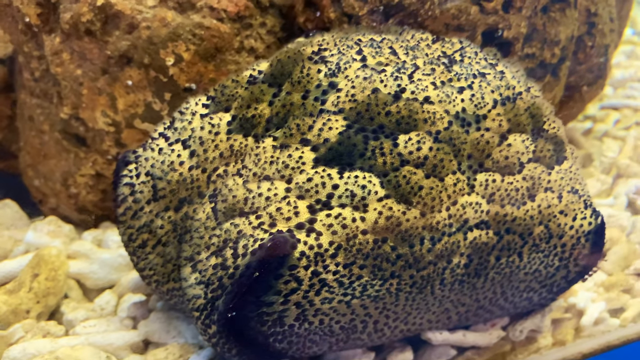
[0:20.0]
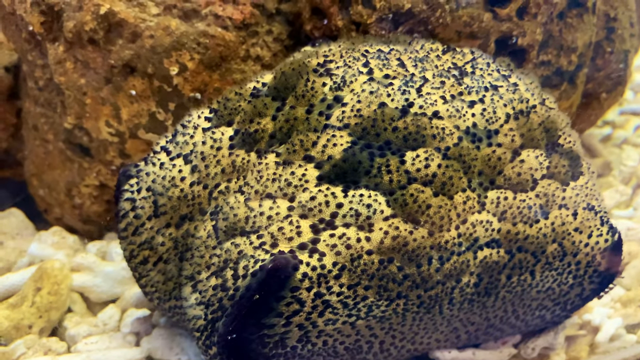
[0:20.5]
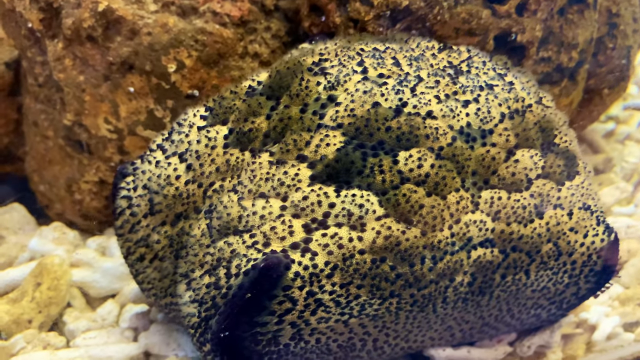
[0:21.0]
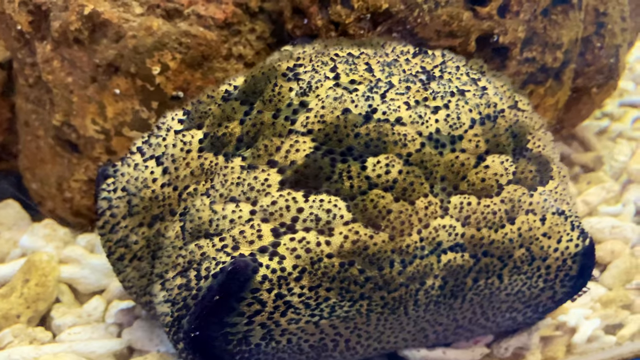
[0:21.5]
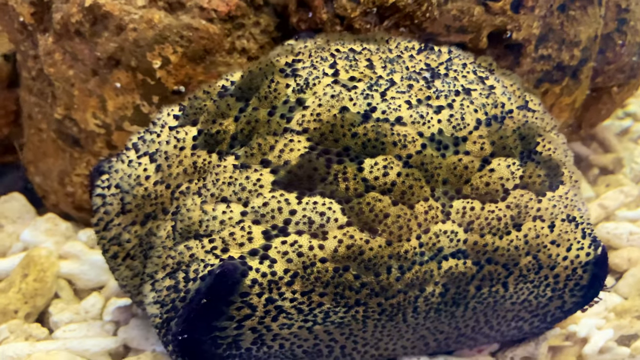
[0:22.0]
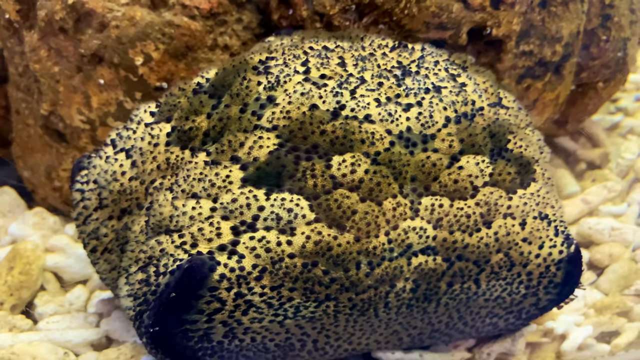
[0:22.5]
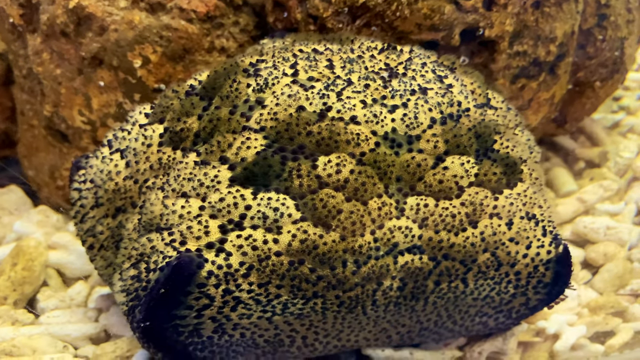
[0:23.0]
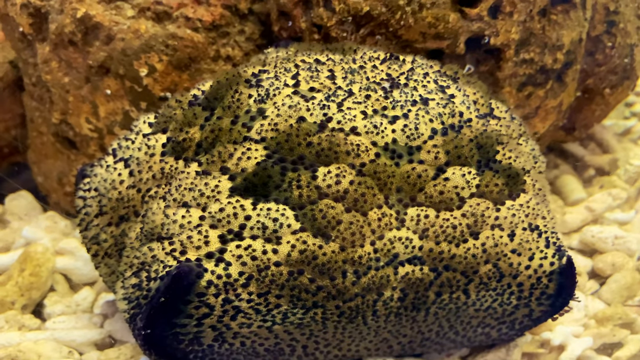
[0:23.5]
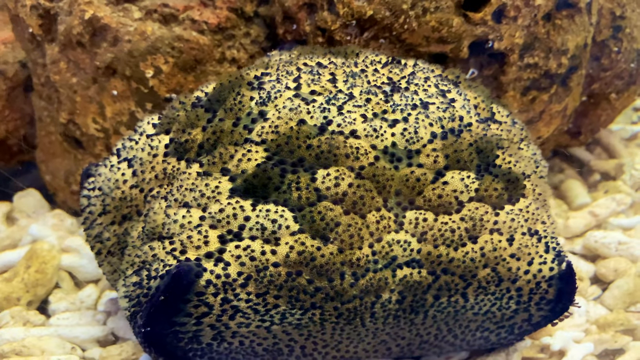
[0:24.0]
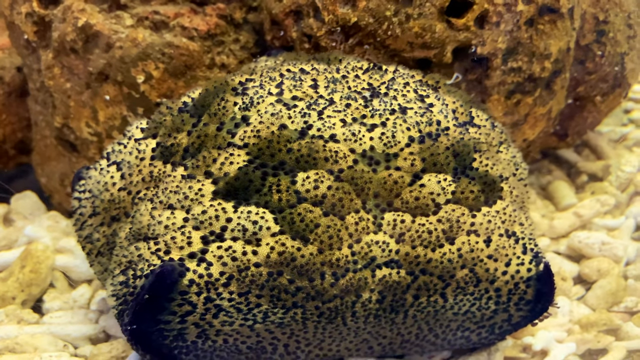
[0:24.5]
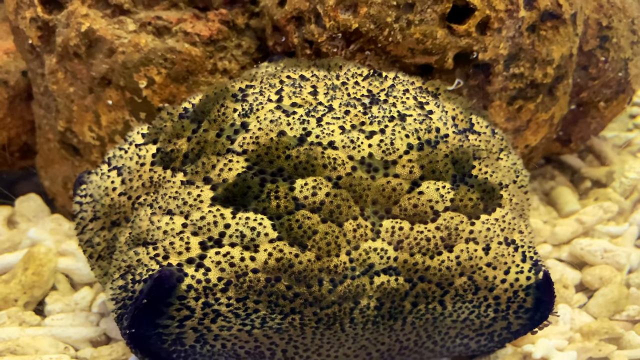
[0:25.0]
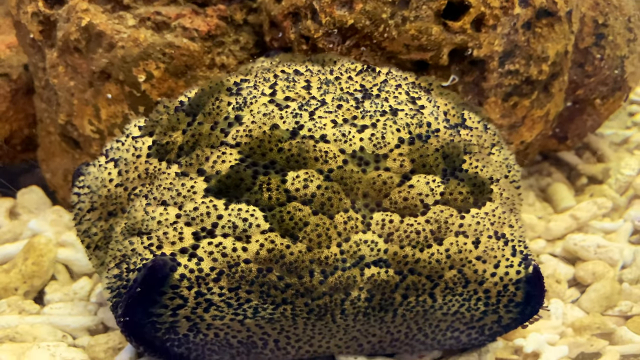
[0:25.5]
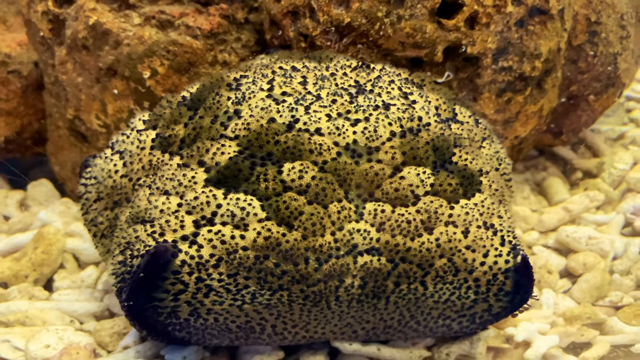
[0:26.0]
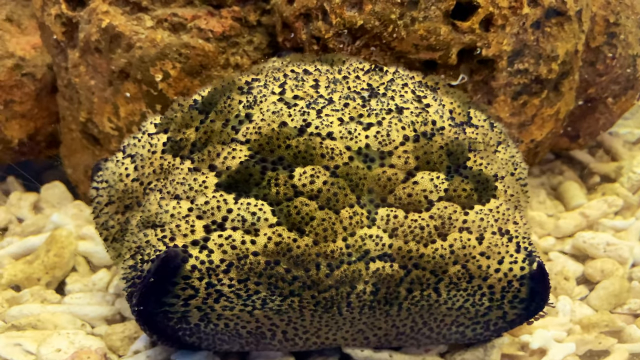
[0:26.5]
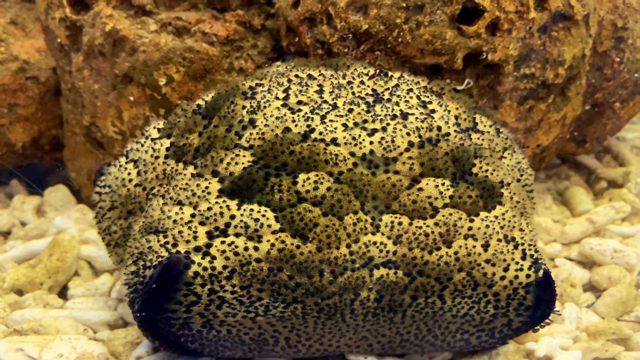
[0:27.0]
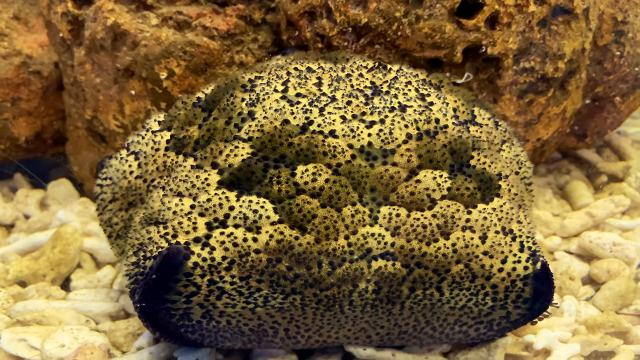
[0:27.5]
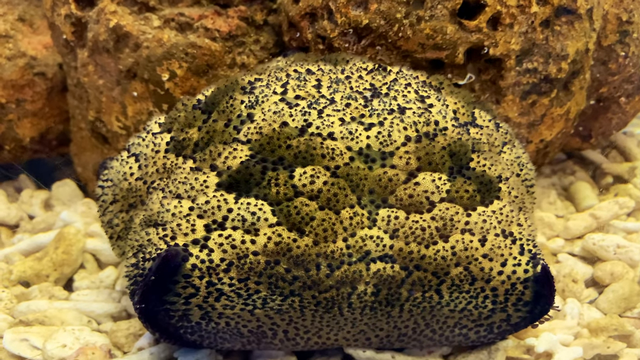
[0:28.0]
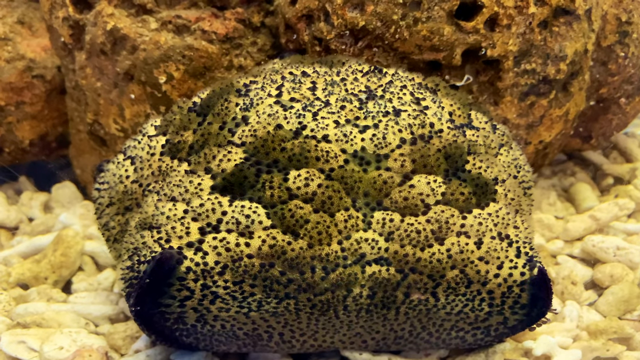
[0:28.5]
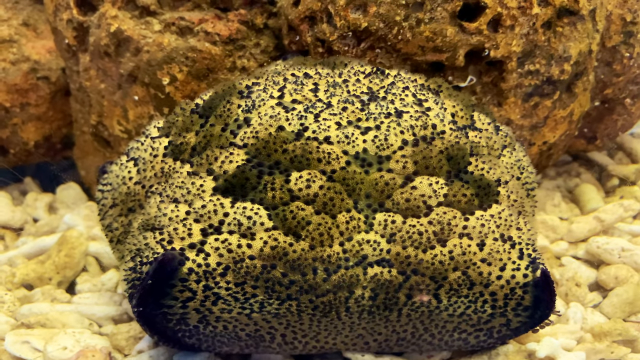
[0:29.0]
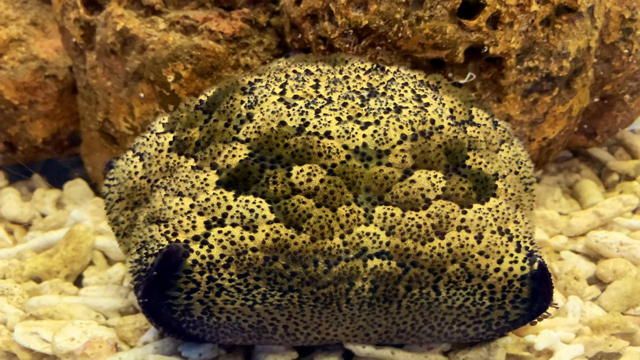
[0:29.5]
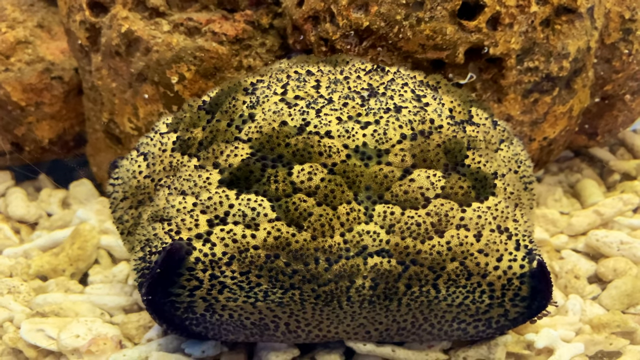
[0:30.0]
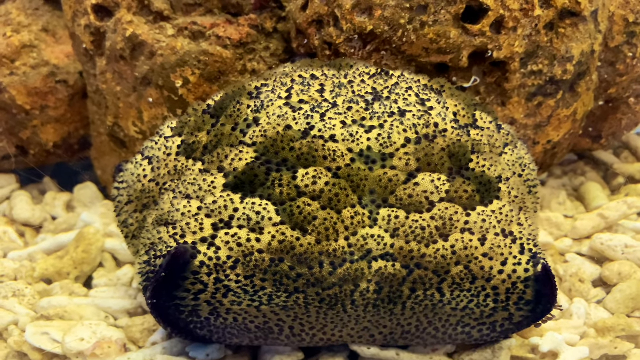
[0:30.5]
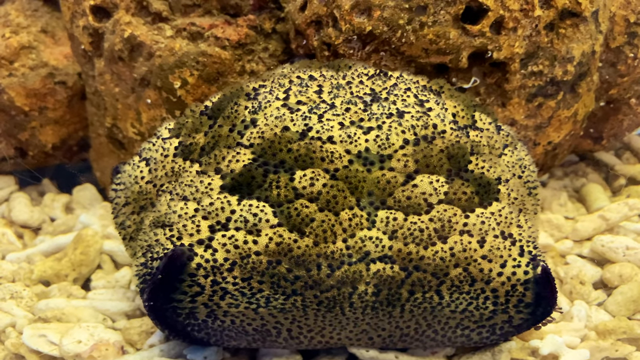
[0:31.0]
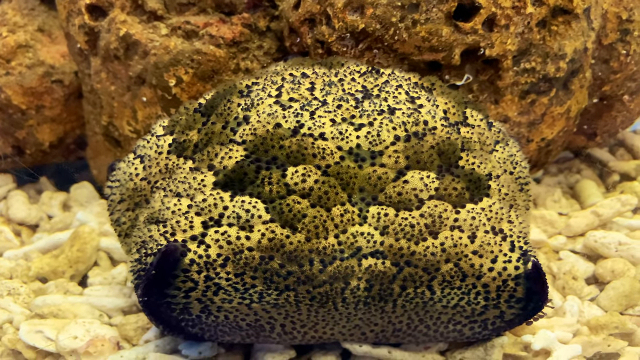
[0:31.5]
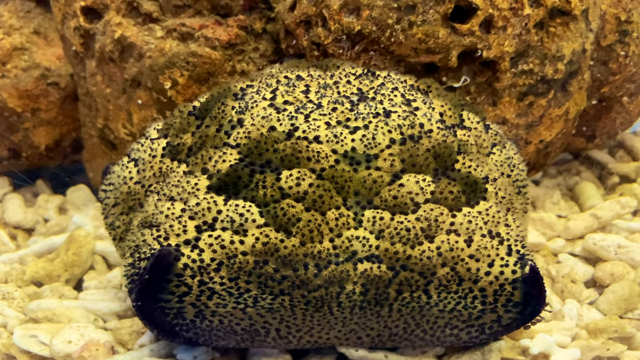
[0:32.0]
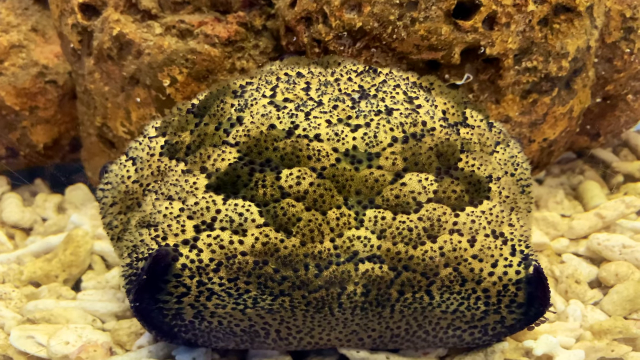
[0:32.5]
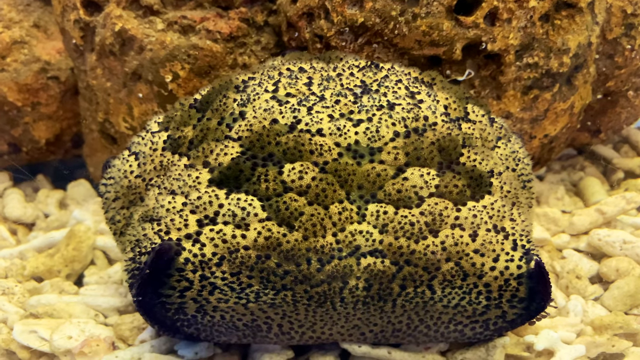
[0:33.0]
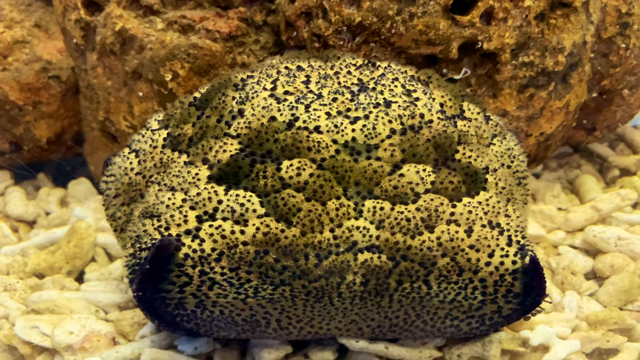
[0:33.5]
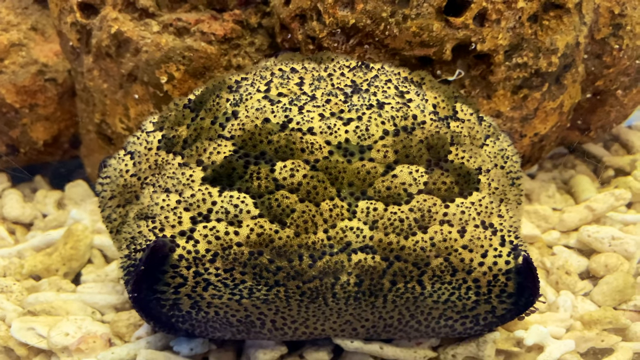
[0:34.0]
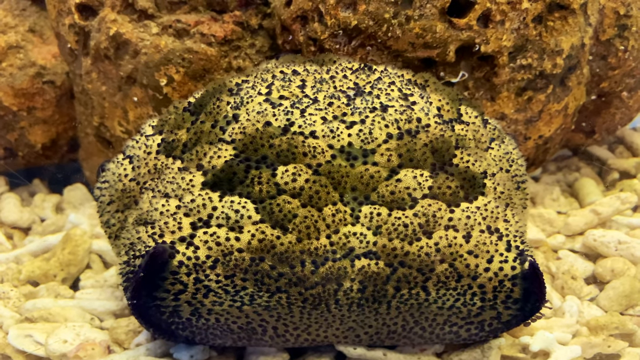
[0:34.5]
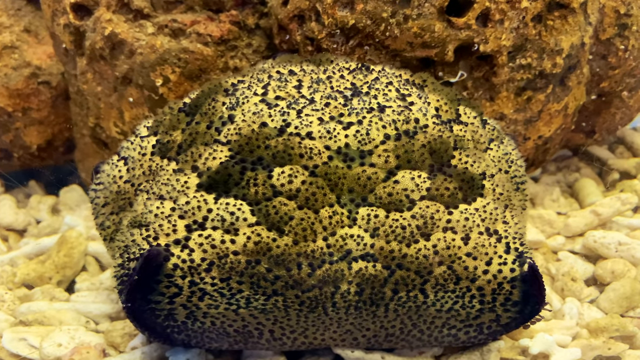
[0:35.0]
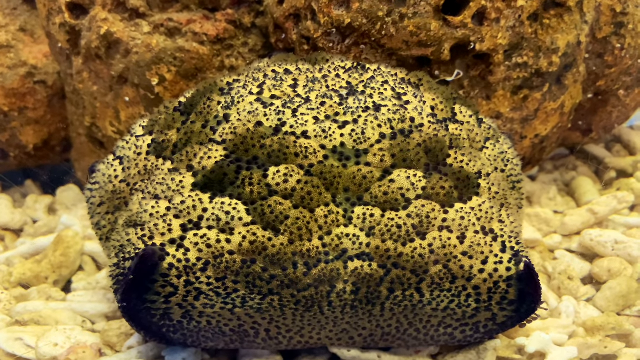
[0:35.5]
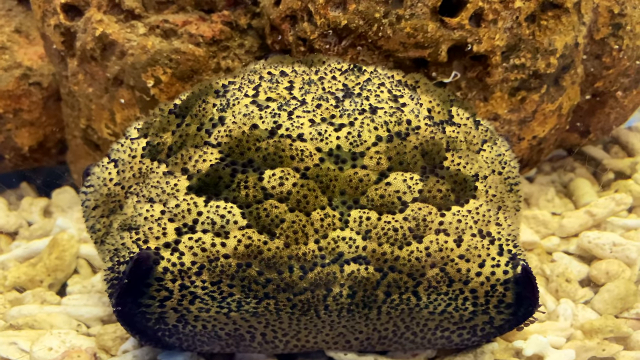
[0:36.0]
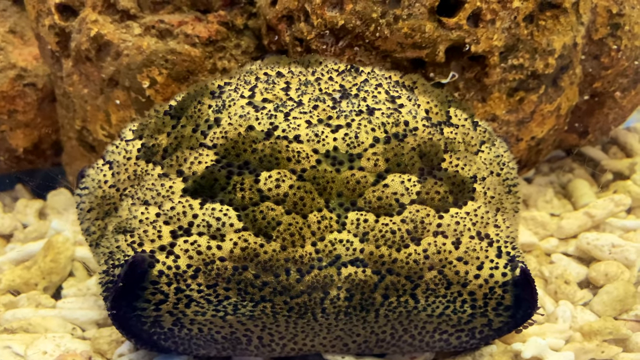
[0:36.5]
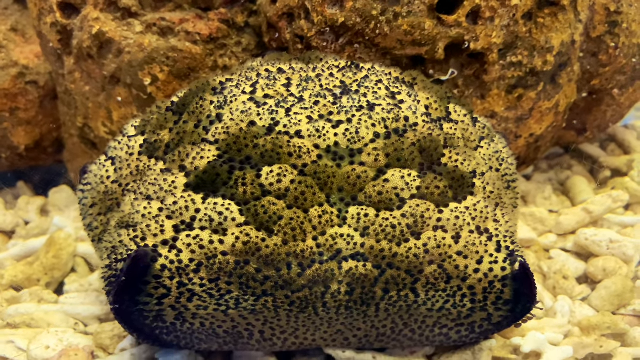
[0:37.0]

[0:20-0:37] An underwater scene contains some plants or animals and natural things in what could be a large aquarium; it looks like a professional area, maybe a public aquarium. Three primary items are visible. In the front is a large black and yellowish object that looks like a giant rock but could be a coral or a living creature of some sort. It has hundreds and hundreds of black areas that could be fungus or some kind of plant growth. It is resting on top of what looks like hundreds of pieces of bleached white and yellow coral, which have indentions, grooves, curves and straight parts and are scattered neatly along the floor. In the background is a large brown boulder with lots of holes and grooves, as if it has seen a lot of wear and tear. It has black, gray and yellow colorations that could be fungus, sea creatures of some sort, or plants growing on it. The water is extremely clear. The camera moves a small amount from left to right.